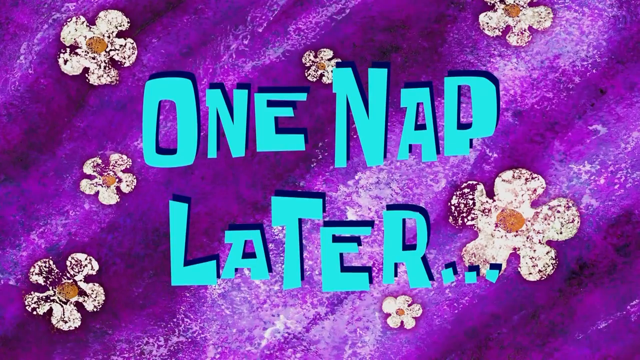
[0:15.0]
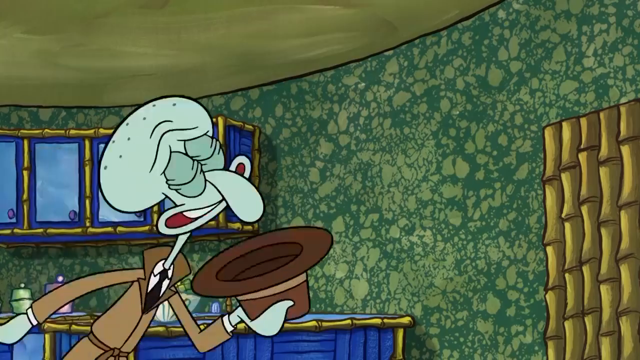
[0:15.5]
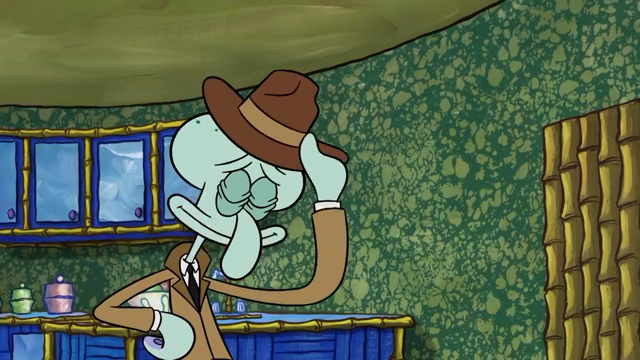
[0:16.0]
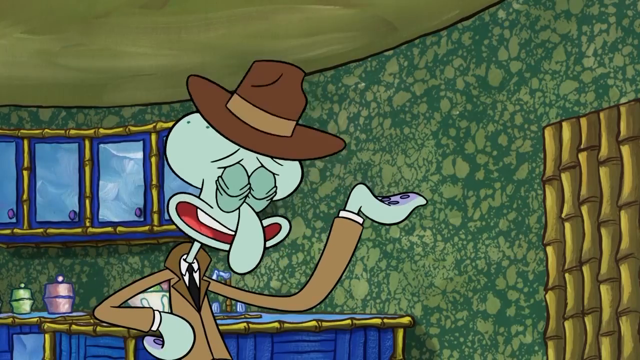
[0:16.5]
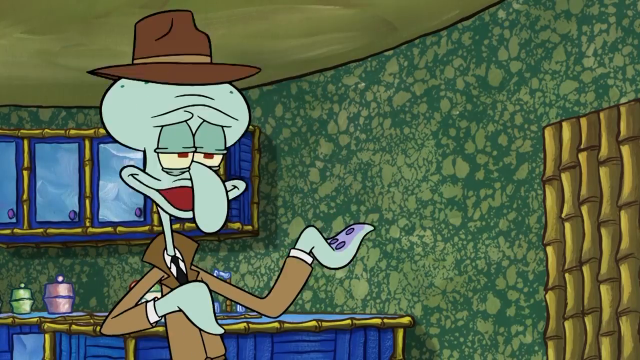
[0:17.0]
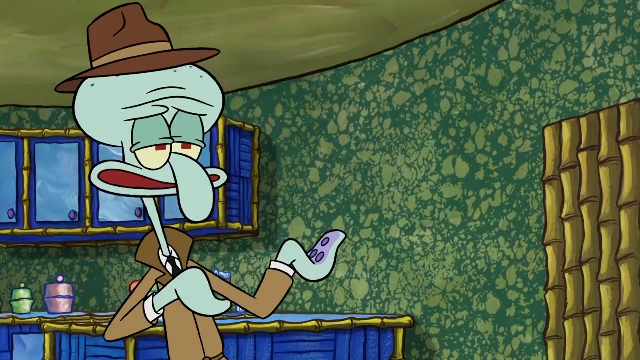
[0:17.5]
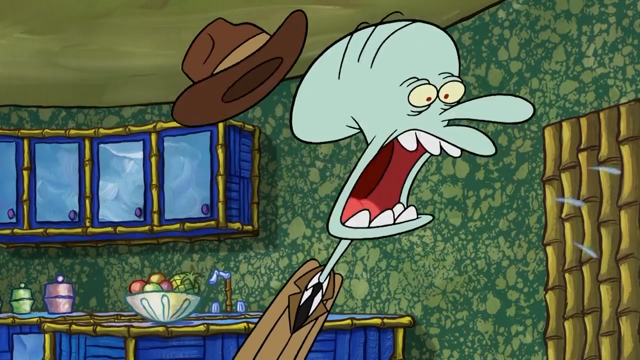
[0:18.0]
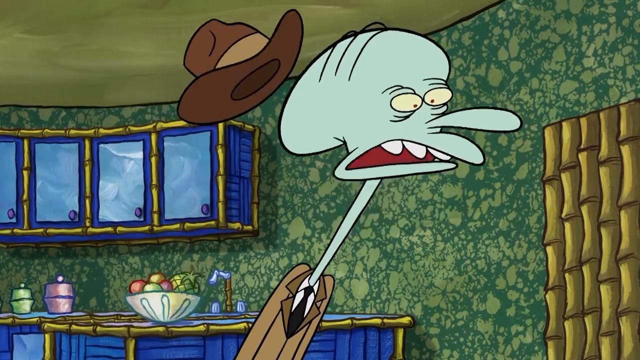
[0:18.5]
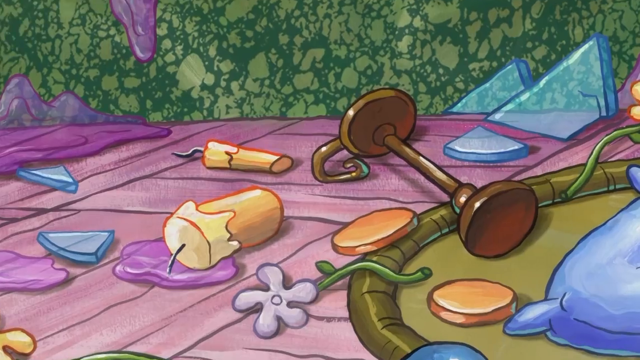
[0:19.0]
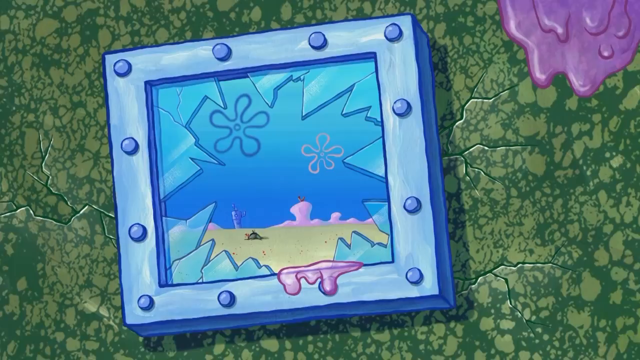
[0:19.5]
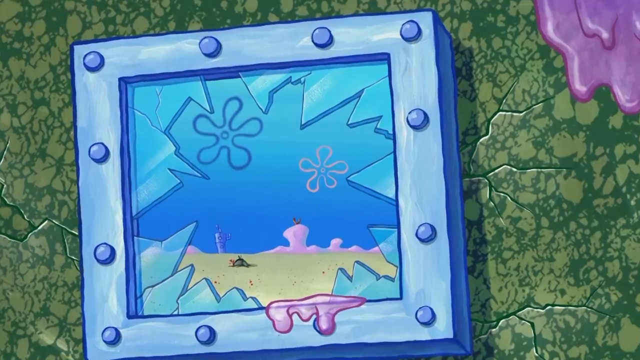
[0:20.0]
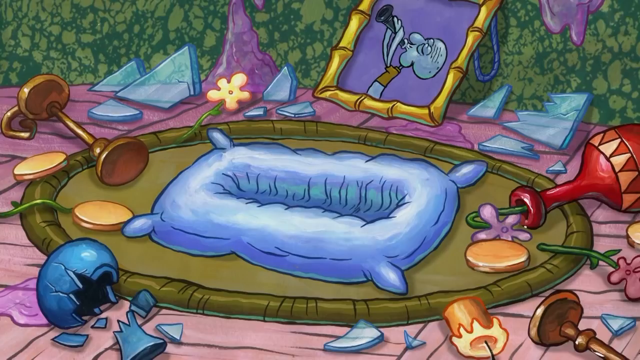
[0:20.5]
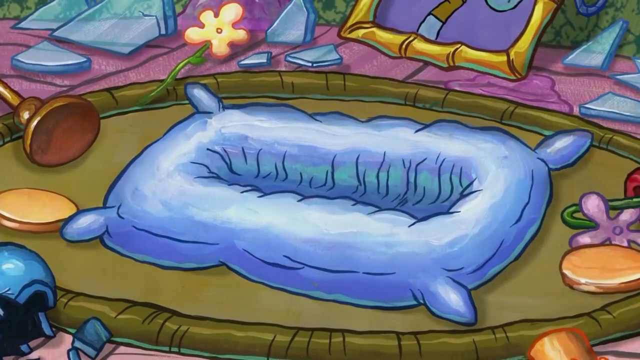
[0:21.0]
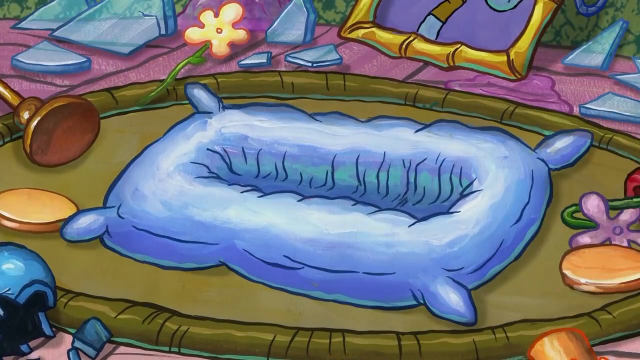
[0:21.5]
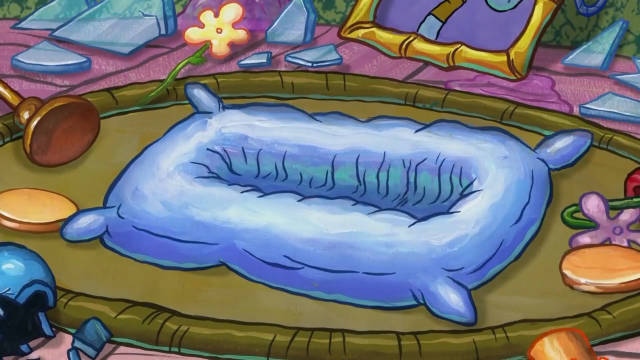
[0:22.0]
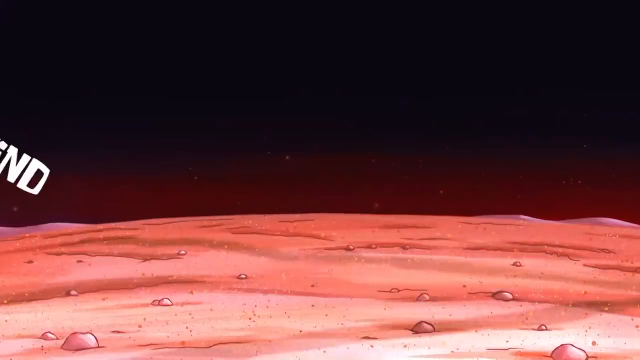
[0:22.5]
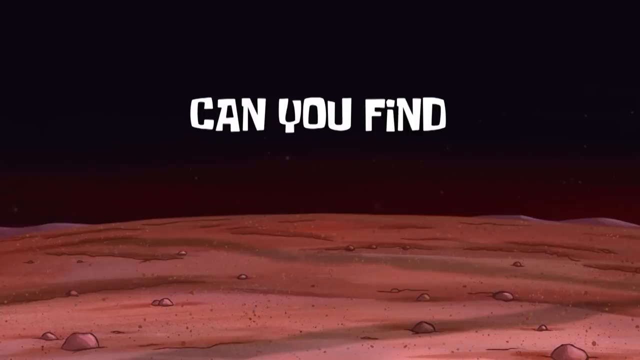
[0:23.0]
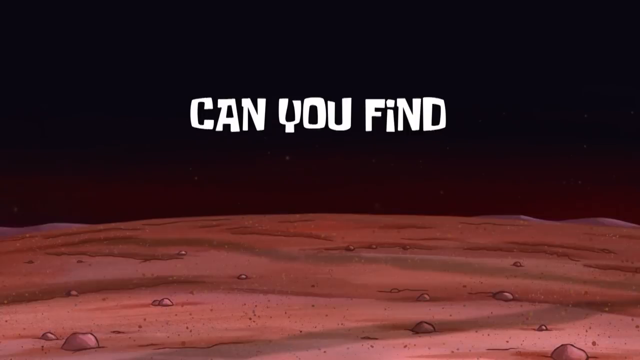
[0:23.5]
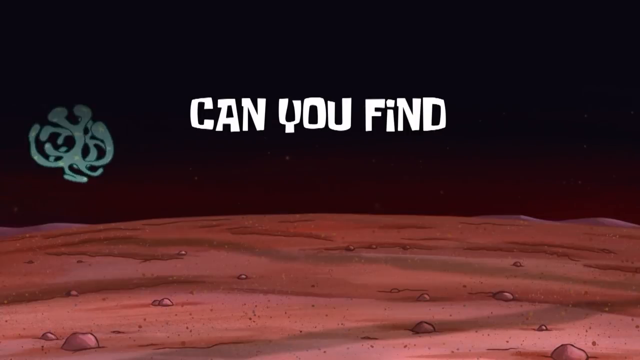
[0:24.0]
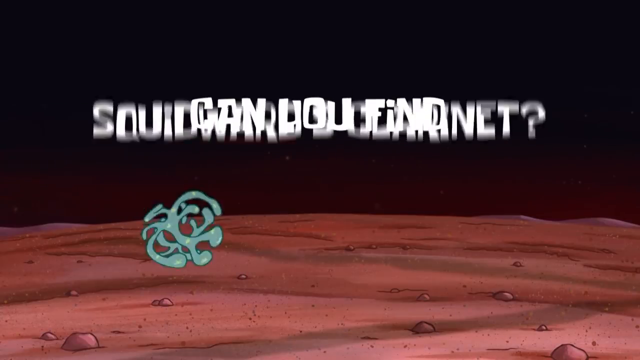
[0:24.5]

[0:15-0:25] Squidward now wears a long-sleeved brown coat over a white dress shirt and a black tie, and he puts on a brown hat that is a cowboy hat of sorts while talking to himself. Suddenly something alarms him and he screams, with spit coming out of his mouth. The view zooms in on the floor of his house: the candles are knocked over, little pedestals are knocked over, and there is broken glass, which comes from the window above the rug with all the ornaments and belongings. It zooms in on the blue pillow where the clarinet was set down; the clarinet is gone, leaving an indent in its shape. It then cuts to kind of a landscape view of reddish-brownish ground with a black or dark brown background, and white text appears on screen: "Can you find Squidward's Clarinet?"